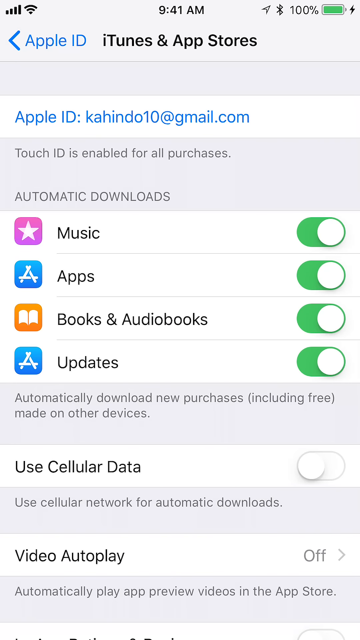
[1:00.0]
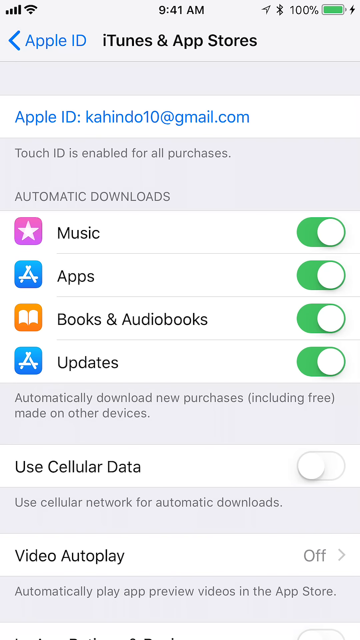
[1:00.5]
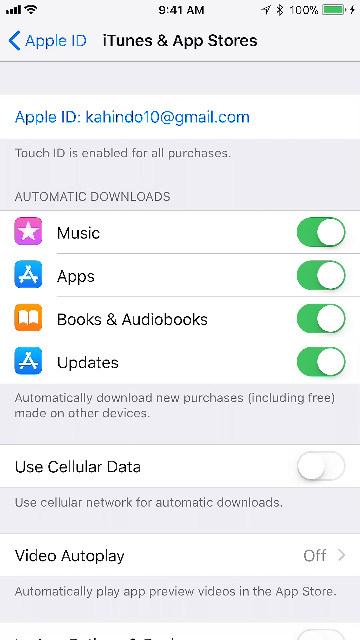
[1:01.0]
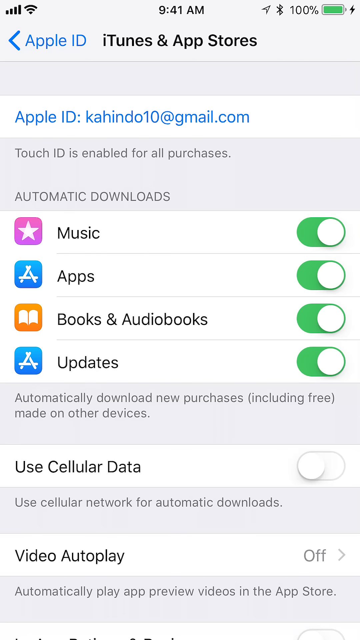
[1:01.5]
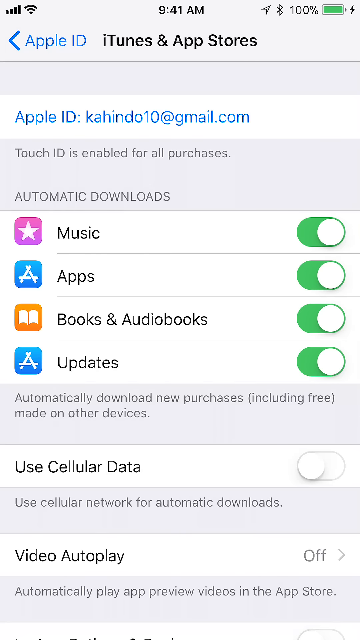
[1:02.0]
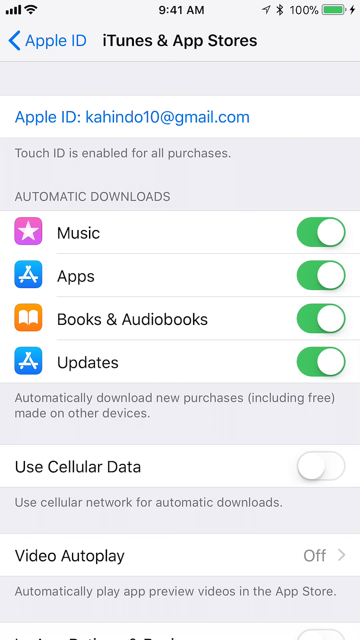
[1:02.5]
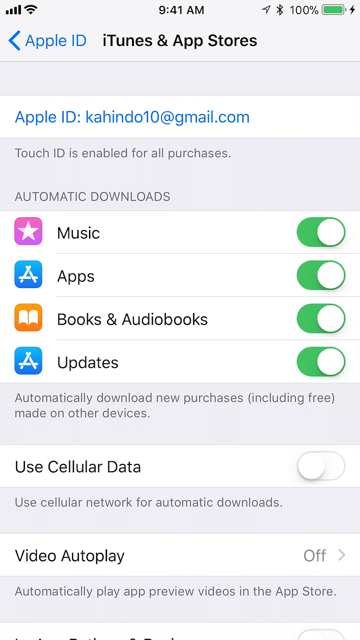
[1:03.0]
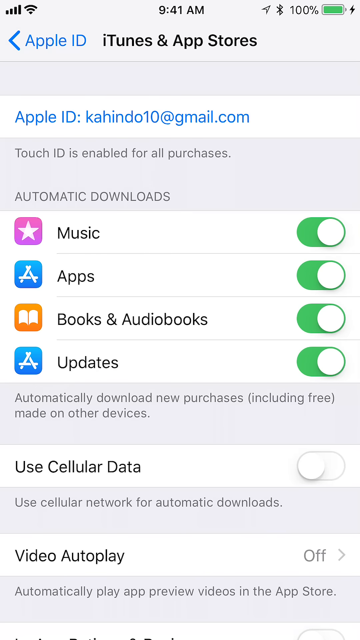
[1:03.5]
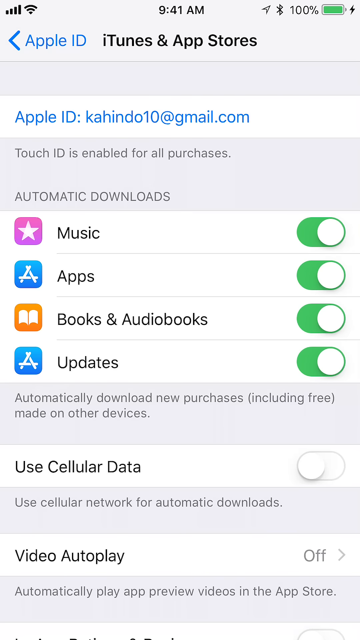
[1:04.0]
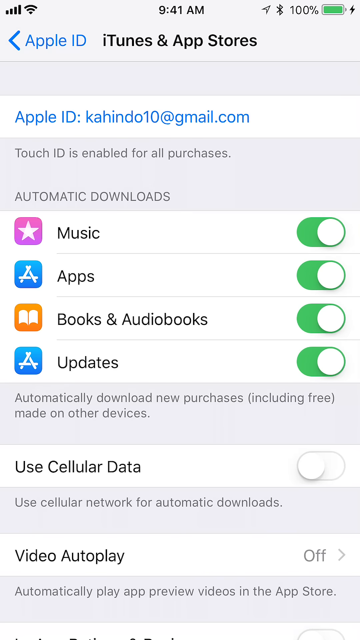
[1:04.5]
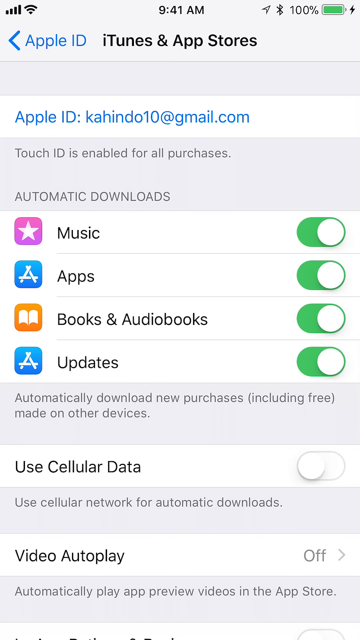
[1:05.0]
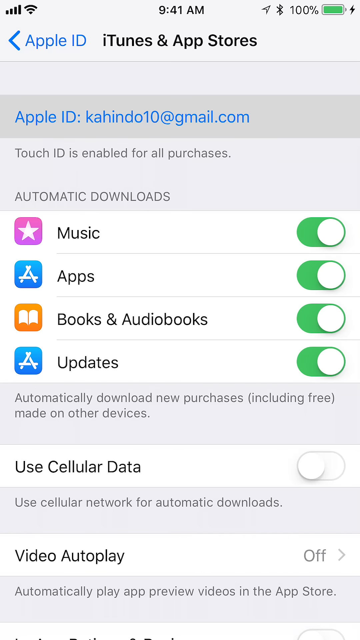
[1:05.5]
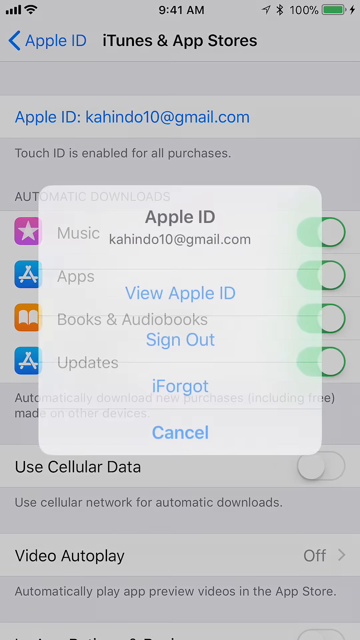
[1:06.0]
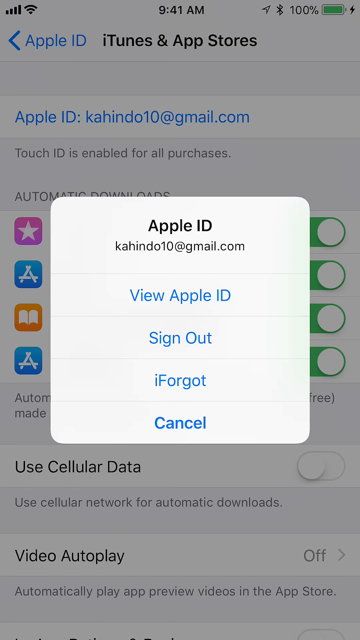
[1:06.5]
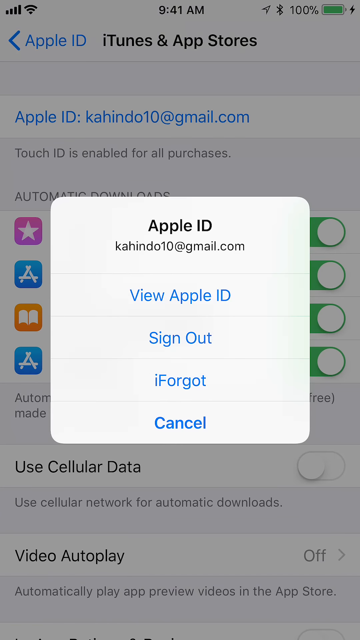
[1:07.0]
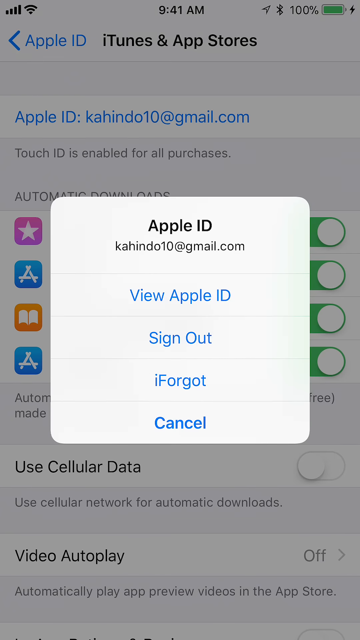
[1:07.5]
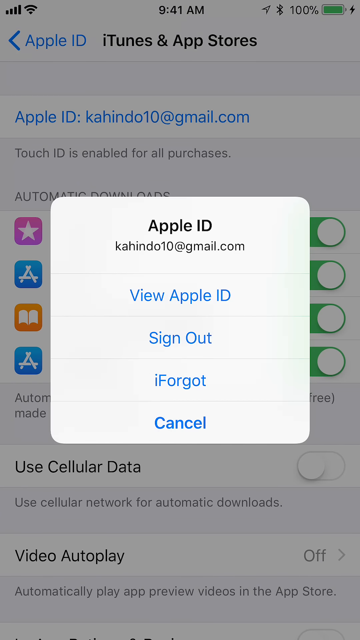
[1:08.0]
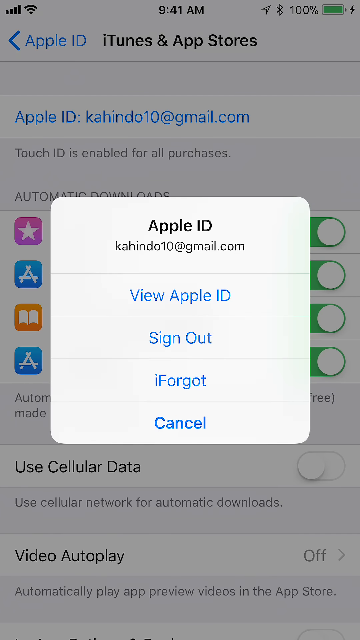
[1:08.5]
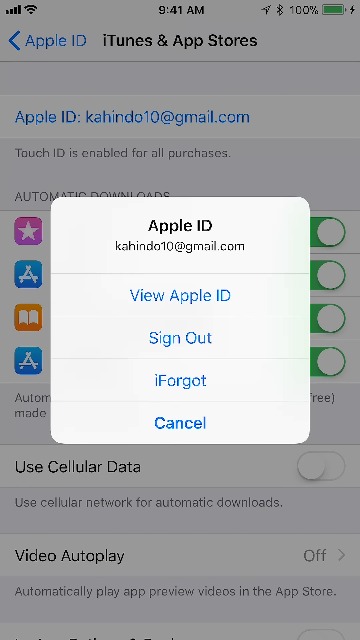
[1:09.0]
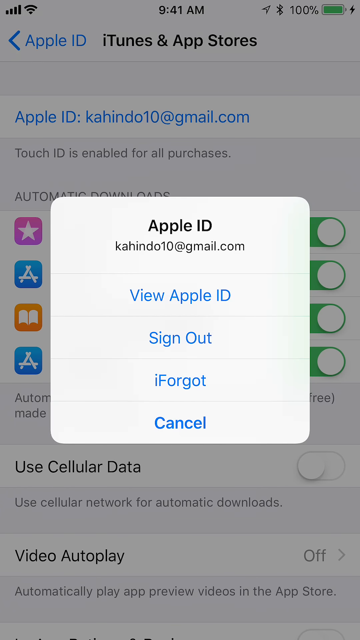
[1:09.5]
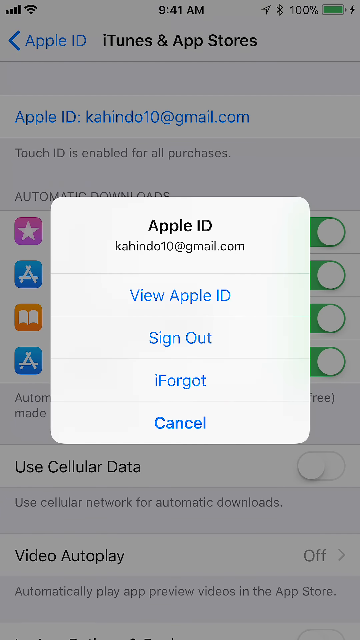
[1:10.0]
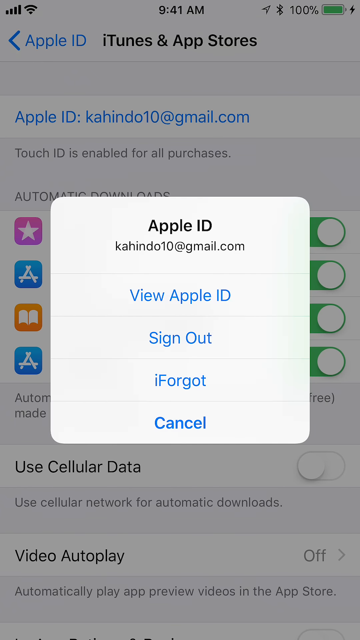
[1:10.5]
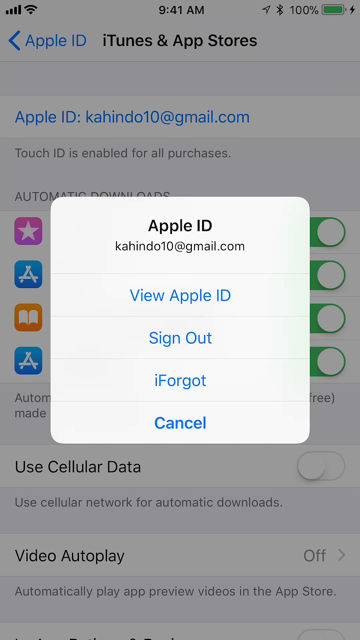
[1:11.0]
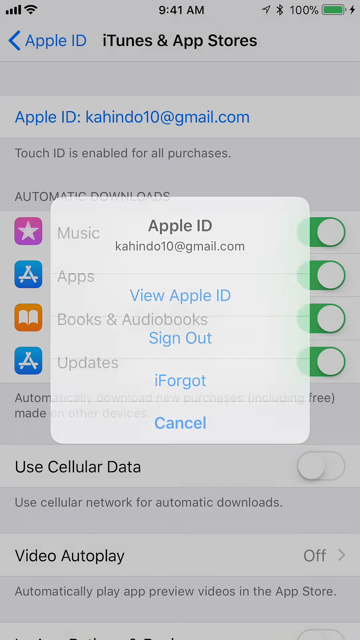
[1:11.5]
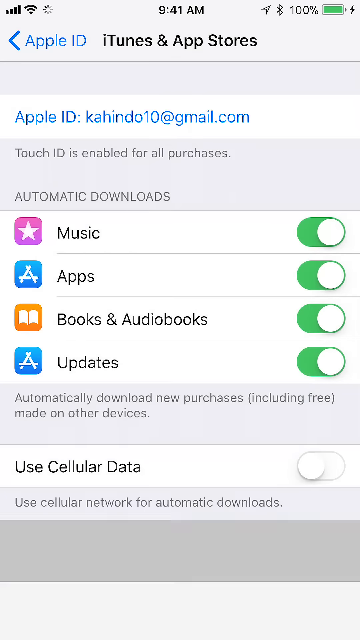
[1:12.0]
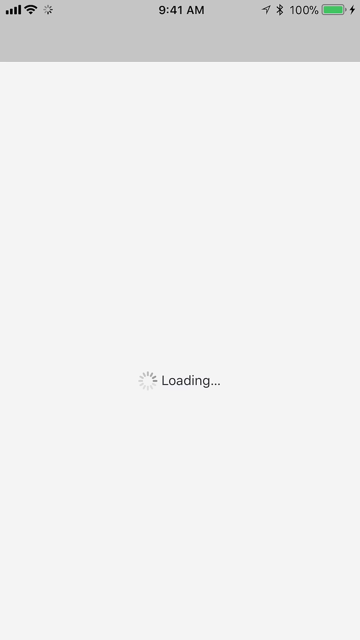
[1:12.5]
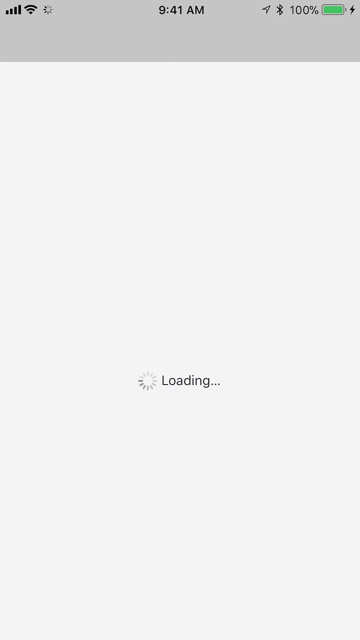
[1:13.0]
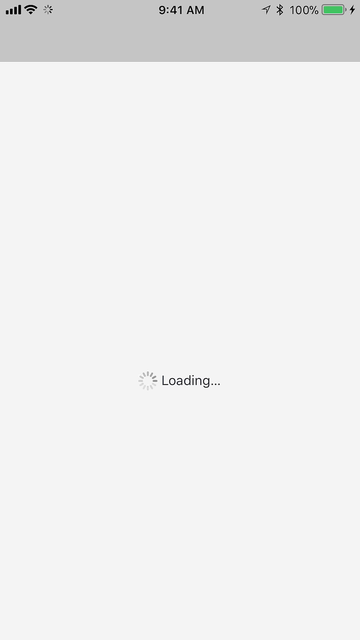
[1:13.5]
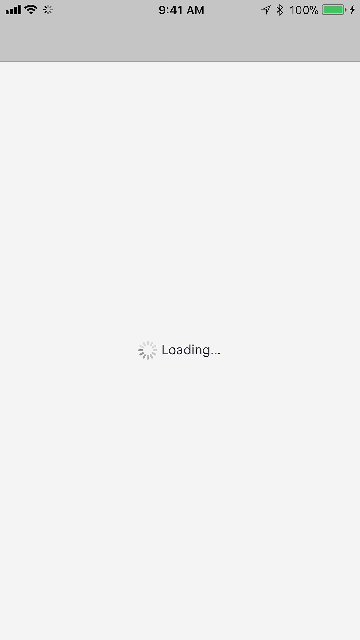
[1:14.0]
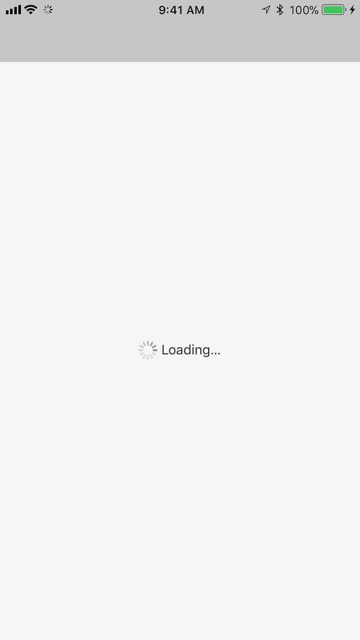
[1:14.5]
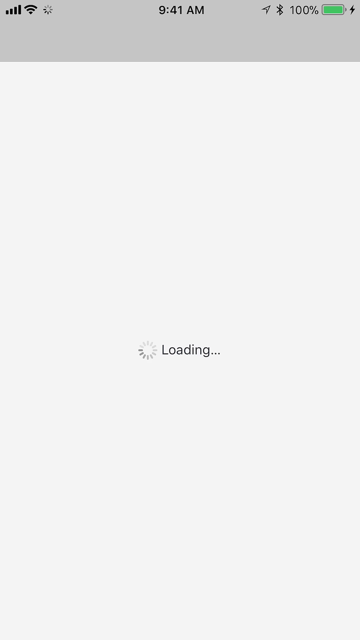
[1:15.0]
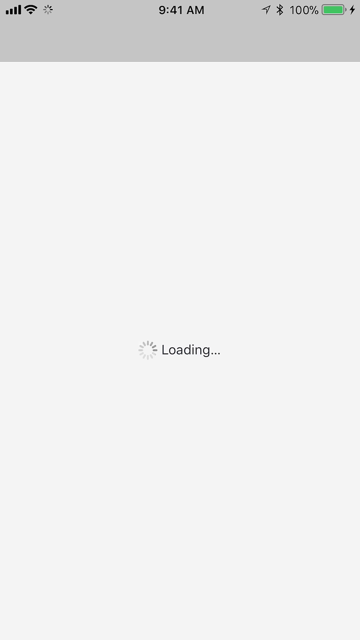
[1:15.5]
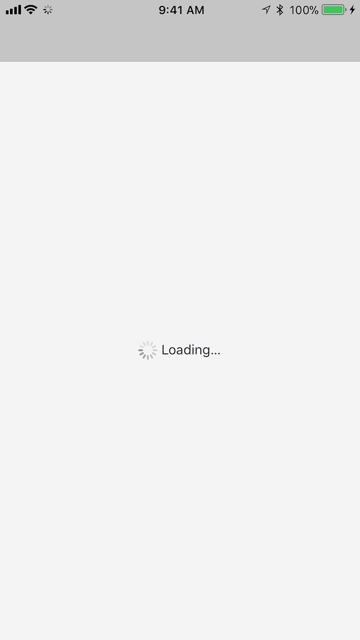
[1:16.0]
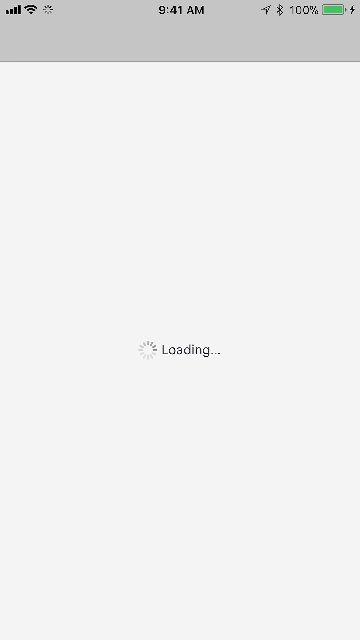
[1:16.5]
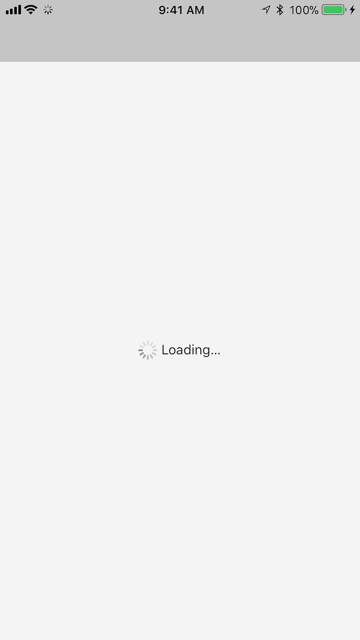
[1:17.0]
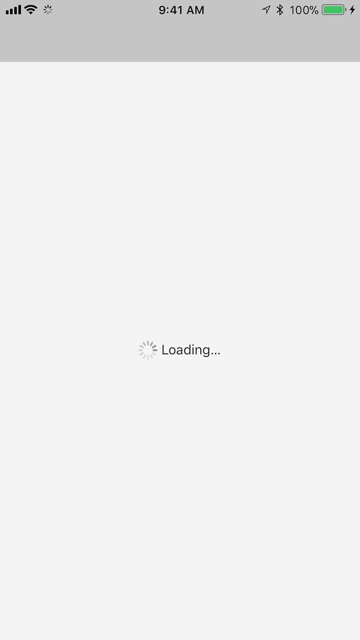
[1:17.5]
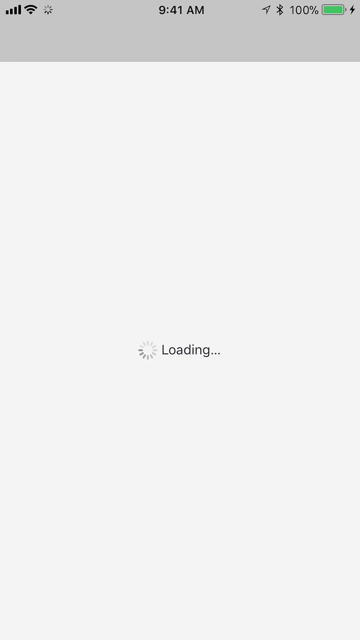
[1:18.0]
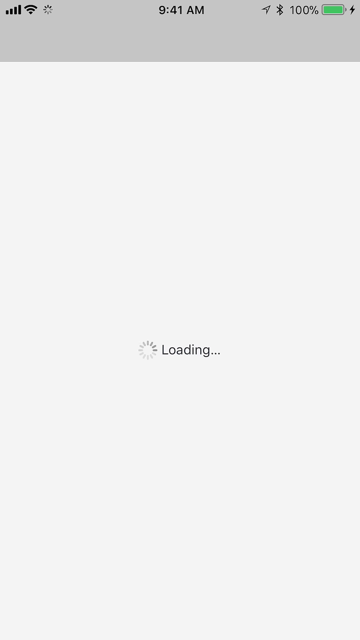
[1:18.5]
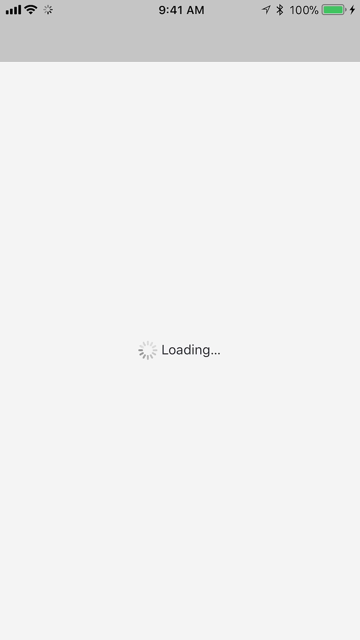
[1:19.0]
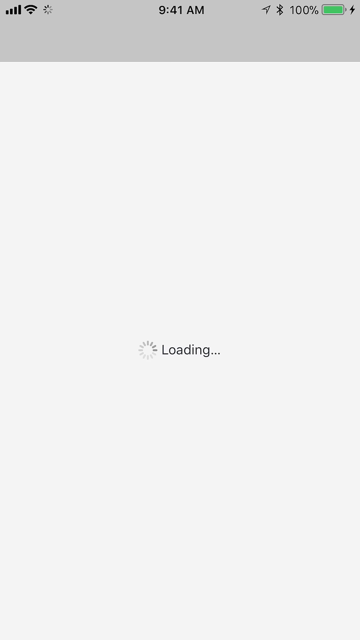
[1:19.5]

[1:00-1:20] What looks like an iPhone screen shows what looks like part of the settings menu. At the top it says "apple id itunes and app stores". Under that, in blue text, it says "apple id", followed by an email address. Below is a menu reading "music", "apps", "books and audiobooks", and under that "updates". Icons are on the left, and on the right are toggle buttons that have been turned on: round white buttons on what look like green pills. Underneath it says "use cellular data", whose button looks turned off and is all white. Under that, "video autoplay" has the text "off" with a chevron pointing to the right.